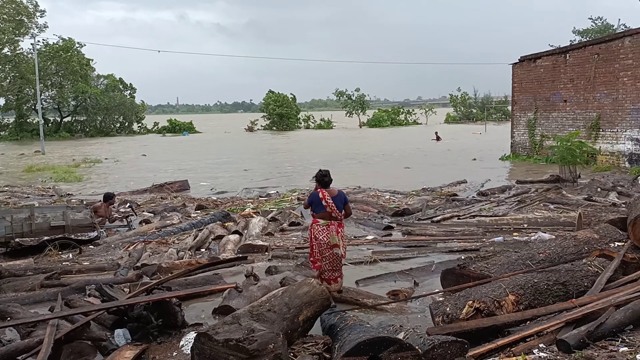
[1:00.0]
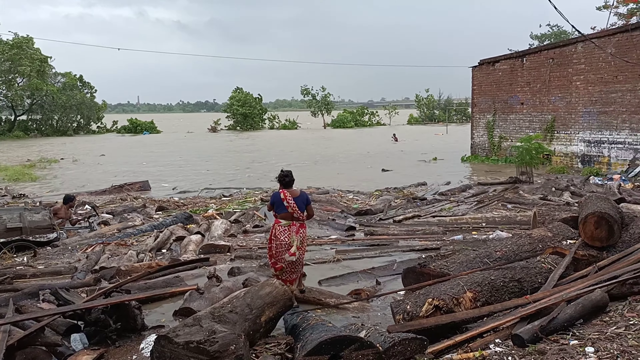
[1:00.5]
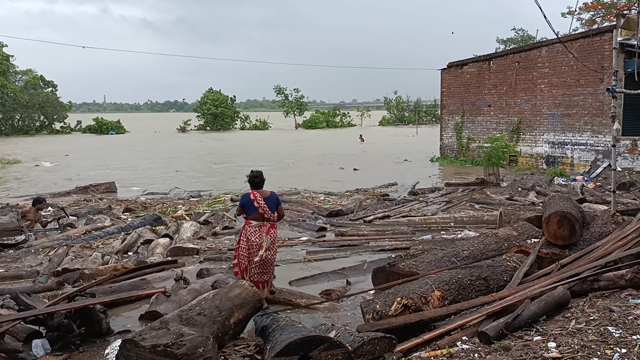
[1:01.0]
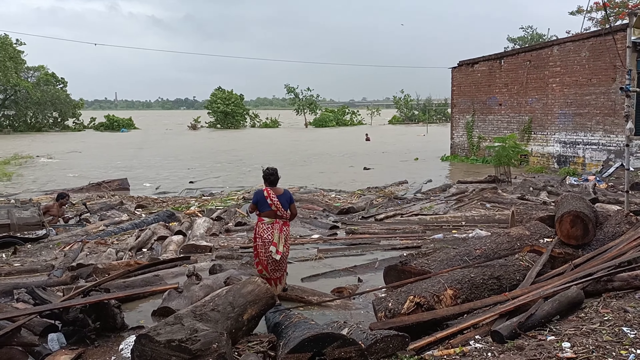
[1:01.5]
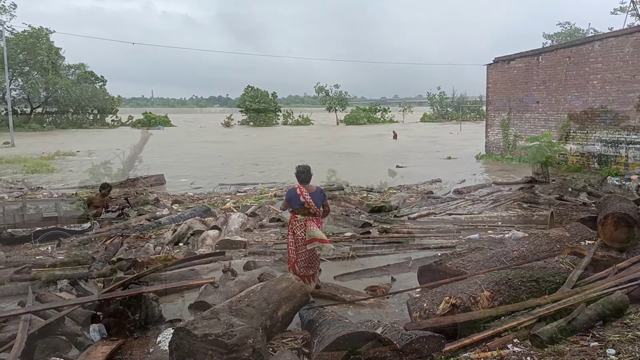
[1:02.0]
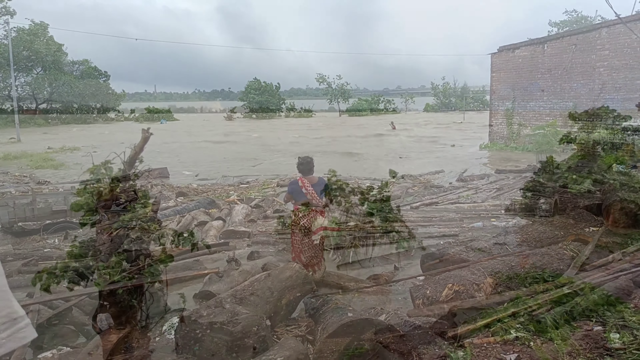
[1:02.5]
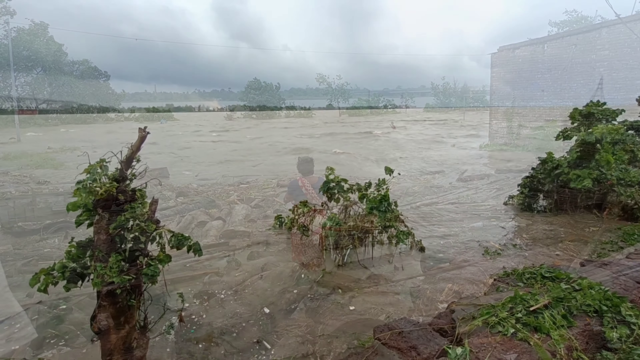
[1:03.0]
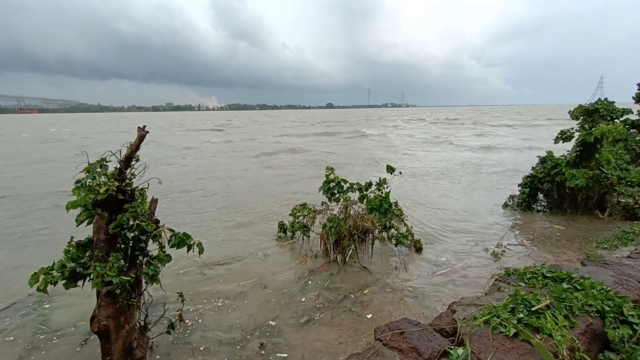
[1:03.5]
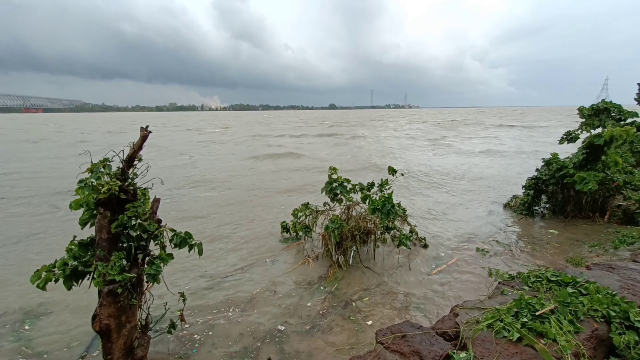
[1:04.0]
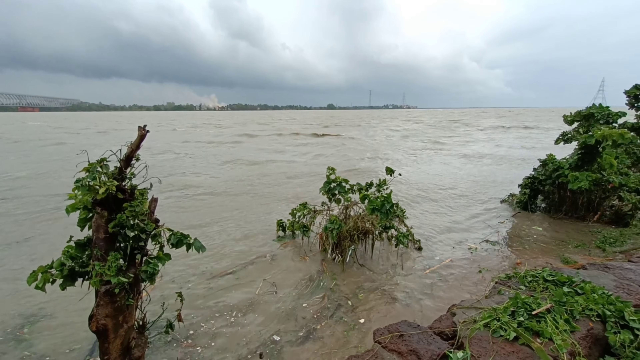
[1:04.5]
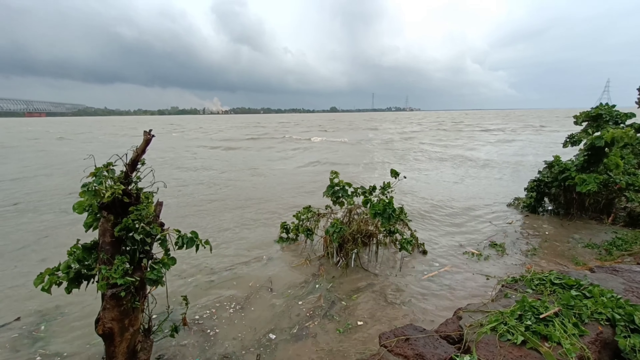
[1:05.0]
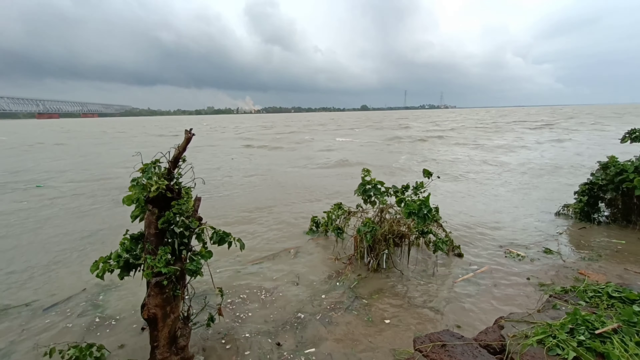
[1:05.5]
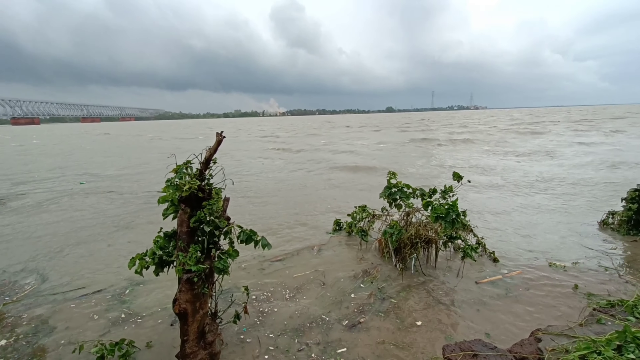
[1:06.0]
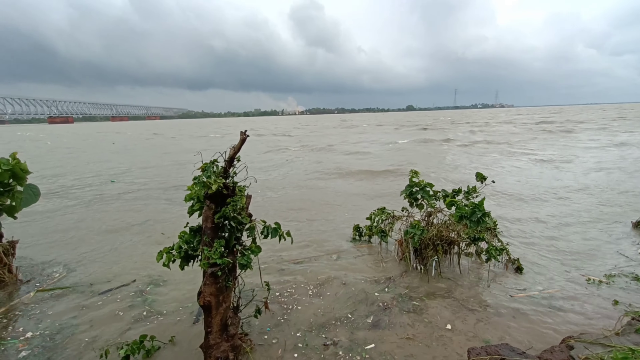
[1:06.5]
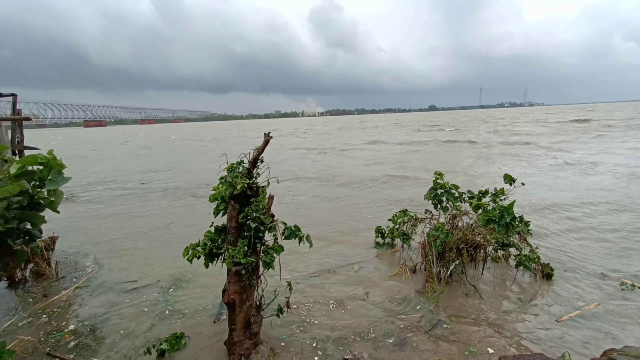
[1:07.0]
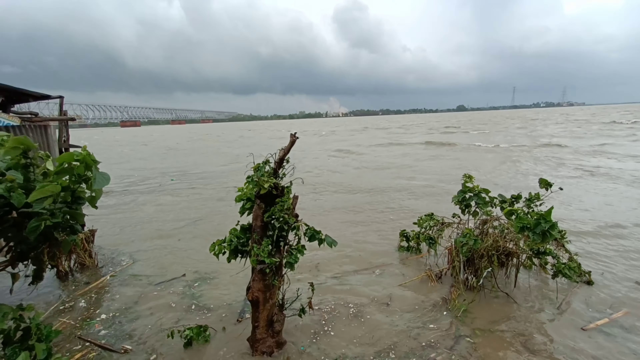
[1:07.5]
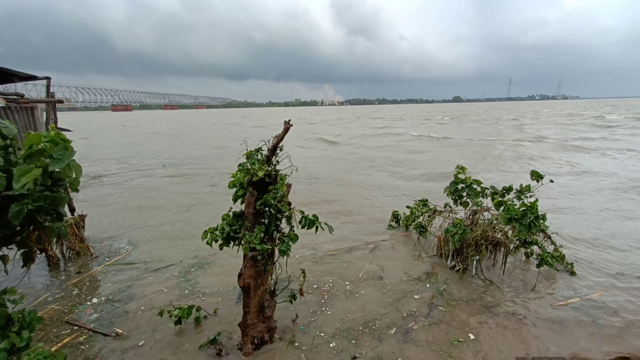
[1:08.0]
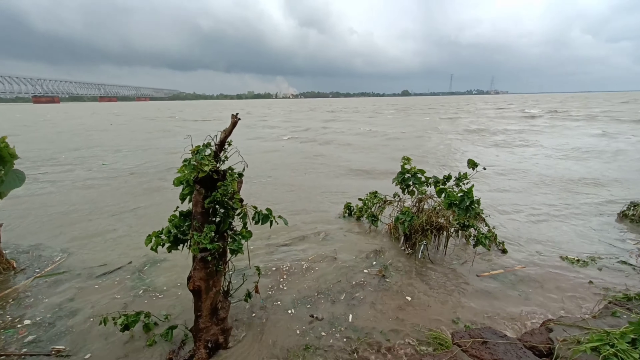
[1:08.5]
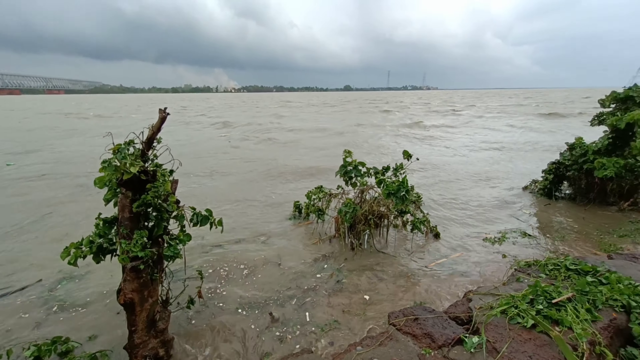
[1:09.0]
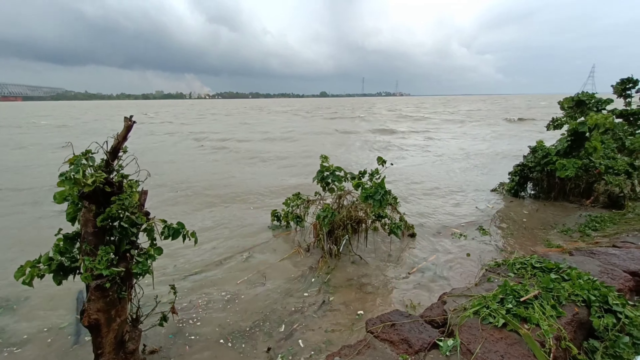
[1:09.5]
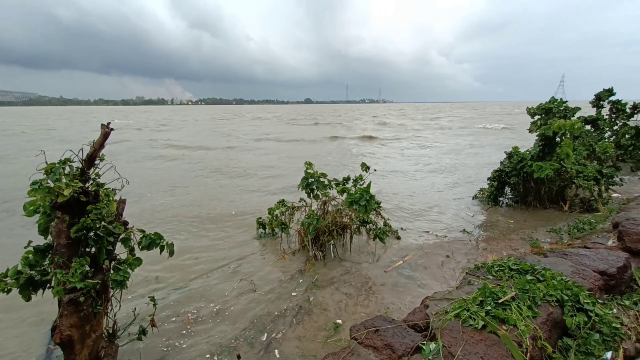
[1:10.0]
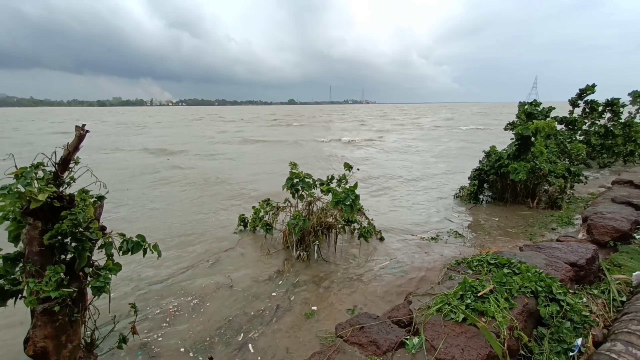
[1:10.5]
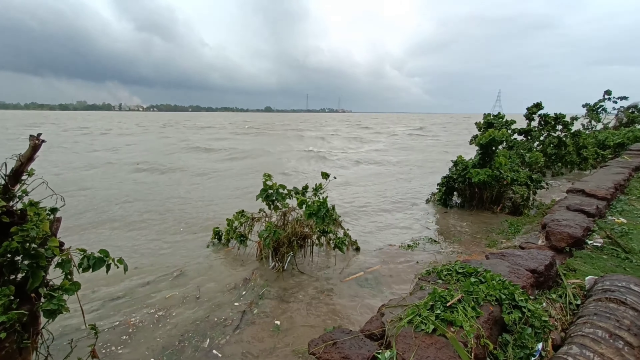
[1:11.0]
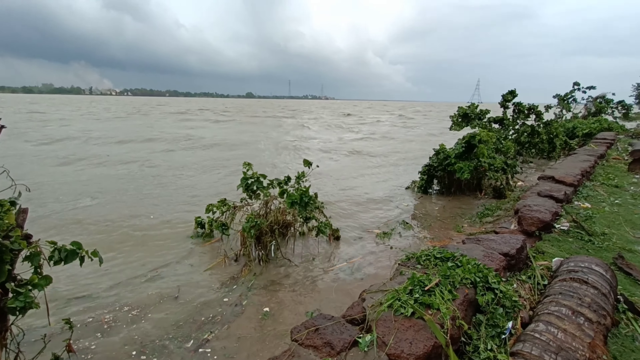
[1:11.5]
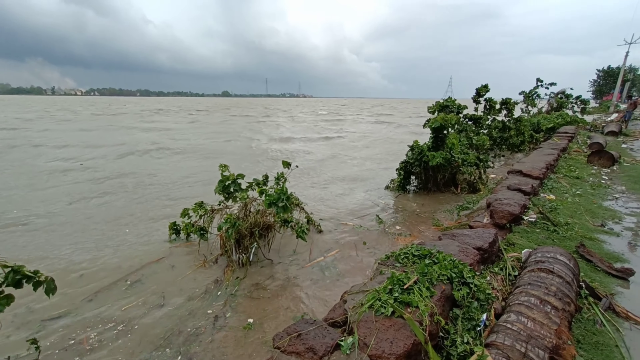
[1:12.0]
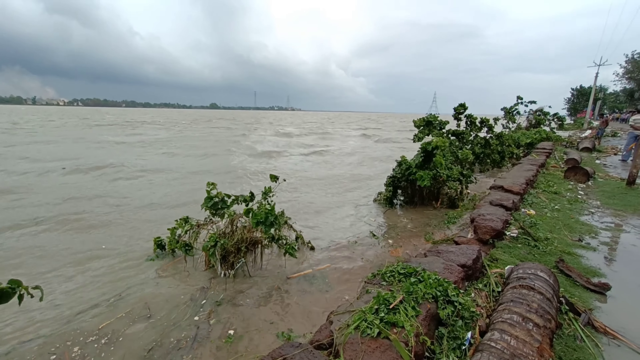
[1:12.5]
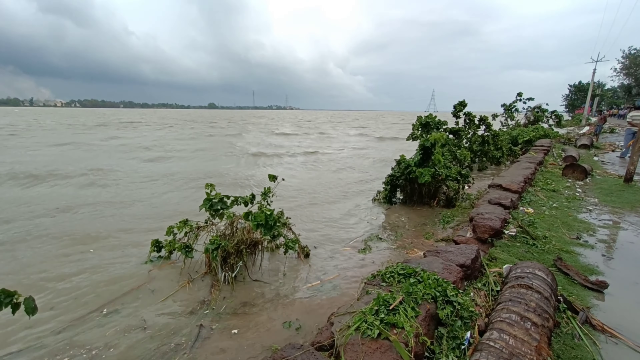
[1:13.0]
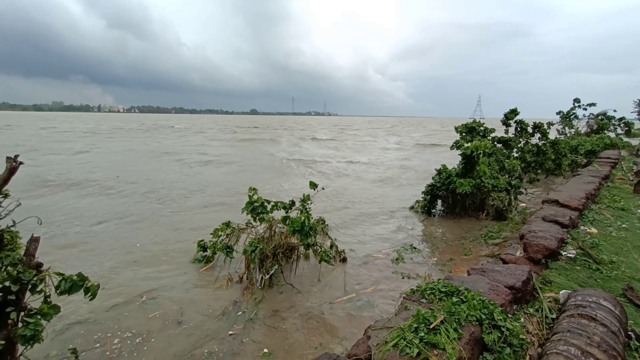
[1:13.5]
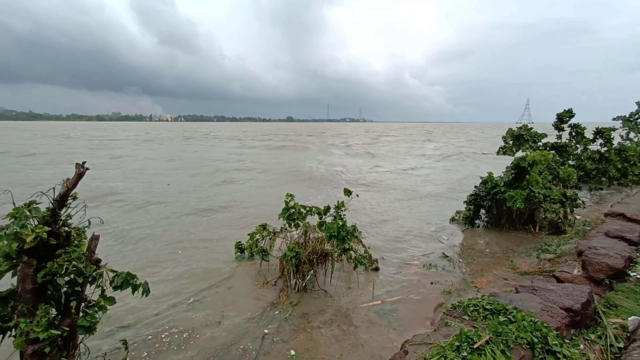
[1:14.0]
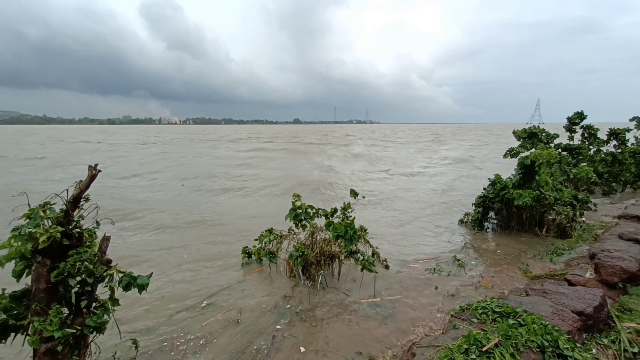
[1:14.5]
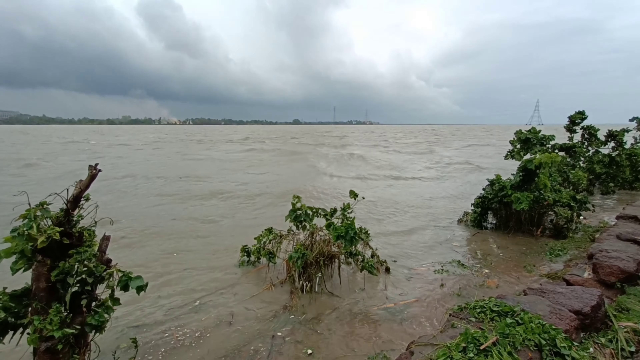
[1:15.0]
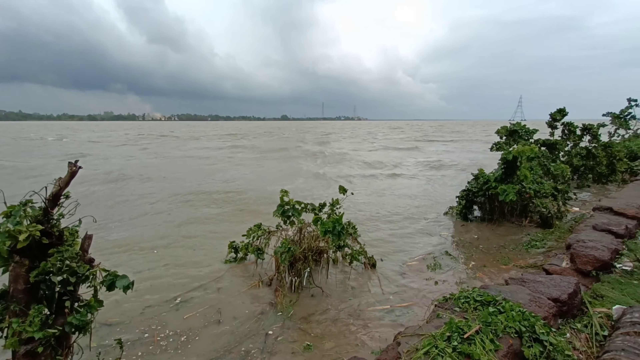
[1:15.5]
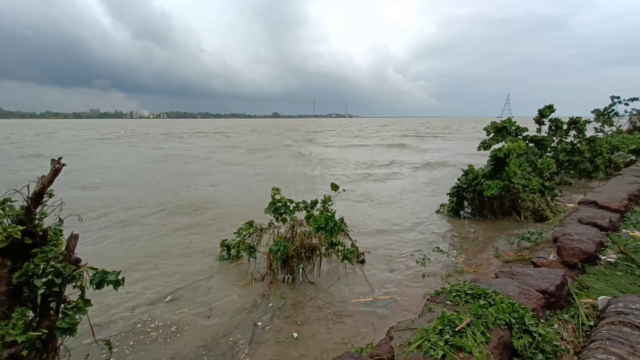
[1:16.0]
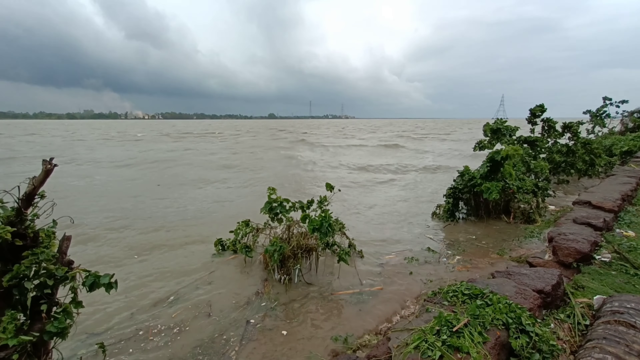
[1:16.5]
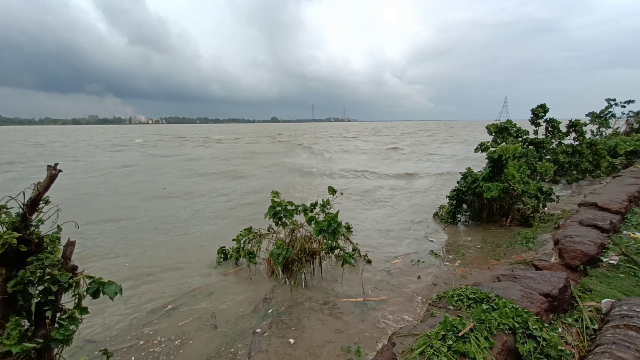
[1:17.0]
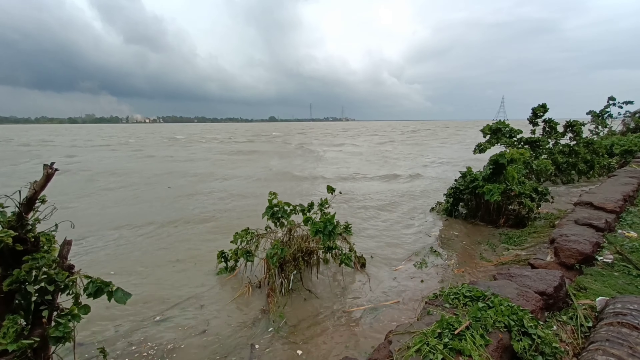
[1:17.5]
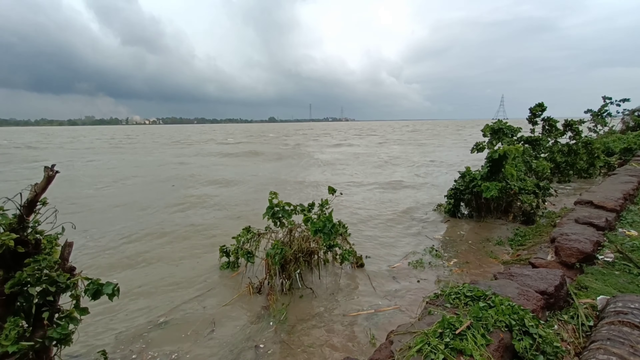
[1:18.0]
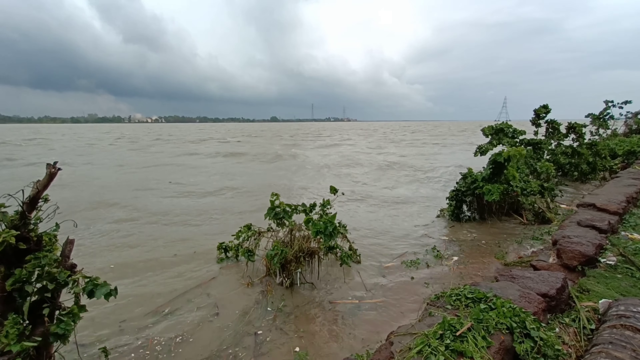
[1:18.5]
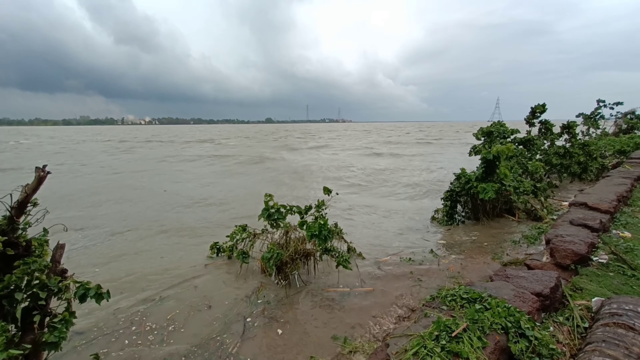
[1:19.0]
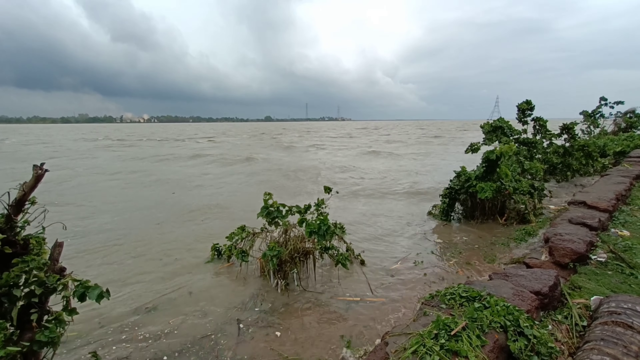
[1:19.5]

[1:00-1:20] The same woman stands on what looks like the rubble of a building, apparently after a natural disaster, seemingly some sort of hurricane. She stands looking outward. The shot cuts to another angle where a person stands somewhat high, looking down at the large body of water that has flooded many trees; the trees move a lot in the strong wind and the water moves fast. Very thick clouds remain, and the sun is kind of trying to break through but is shielded by the clouds.